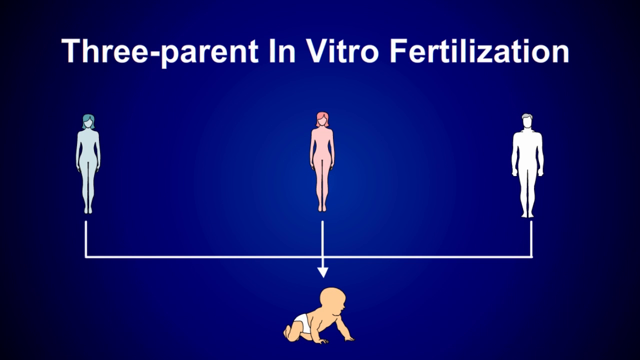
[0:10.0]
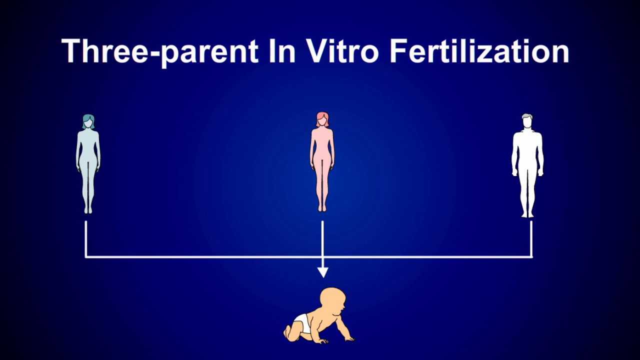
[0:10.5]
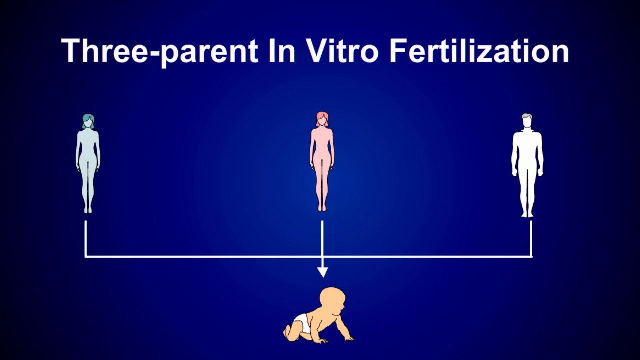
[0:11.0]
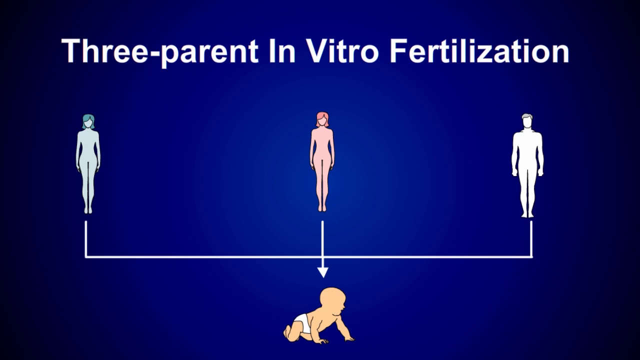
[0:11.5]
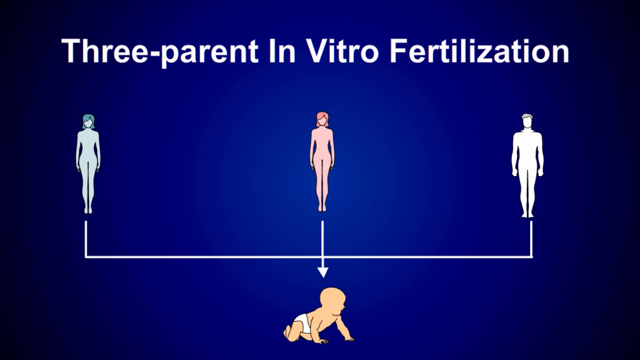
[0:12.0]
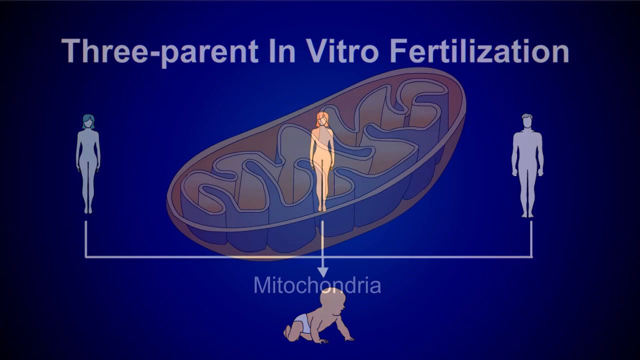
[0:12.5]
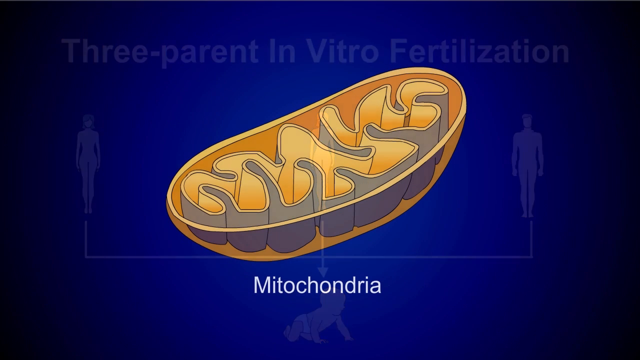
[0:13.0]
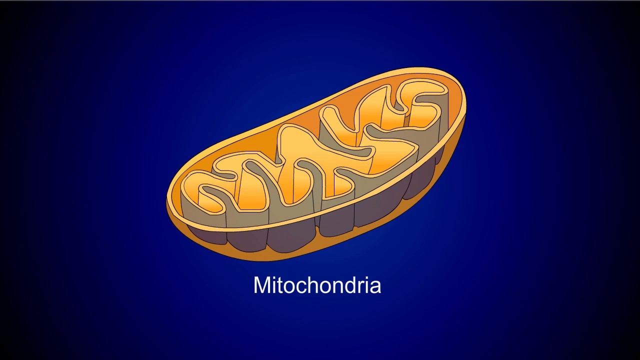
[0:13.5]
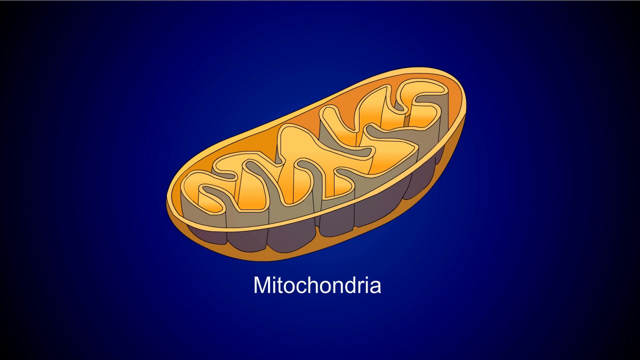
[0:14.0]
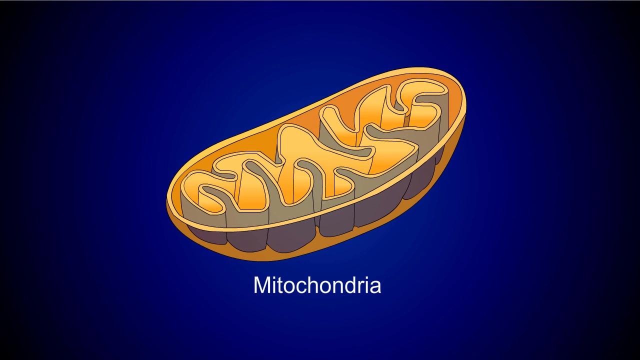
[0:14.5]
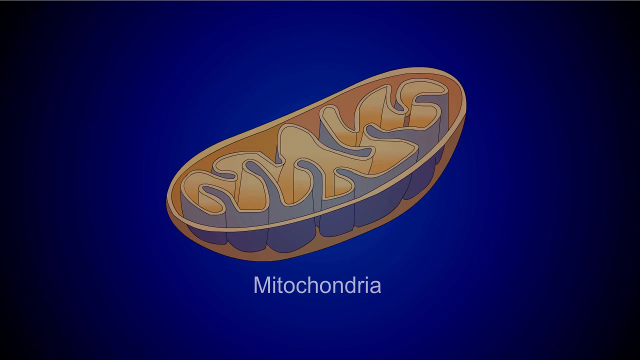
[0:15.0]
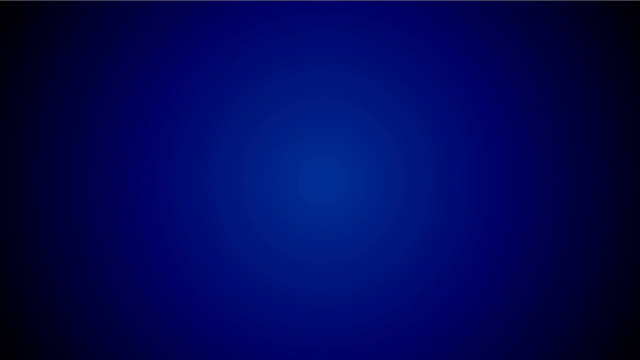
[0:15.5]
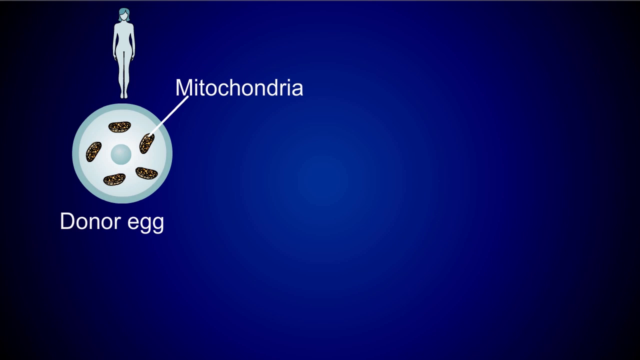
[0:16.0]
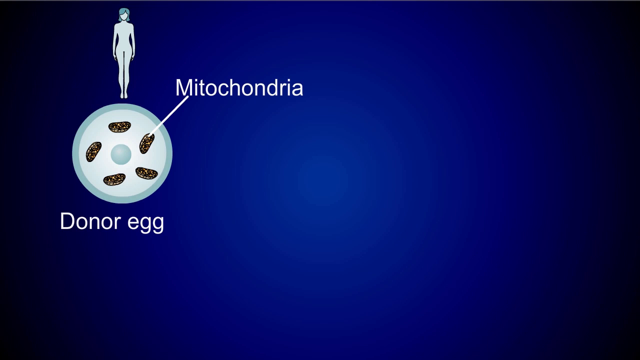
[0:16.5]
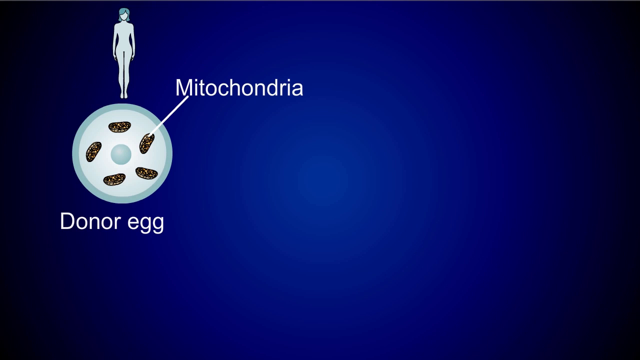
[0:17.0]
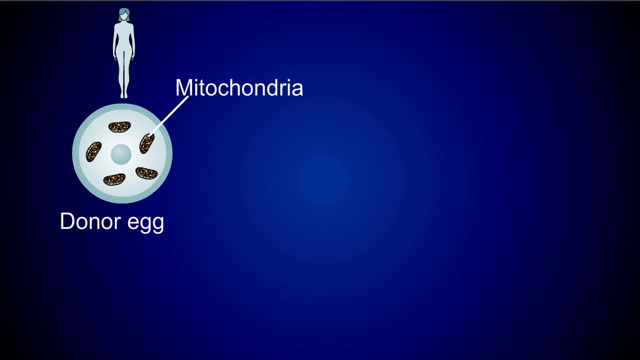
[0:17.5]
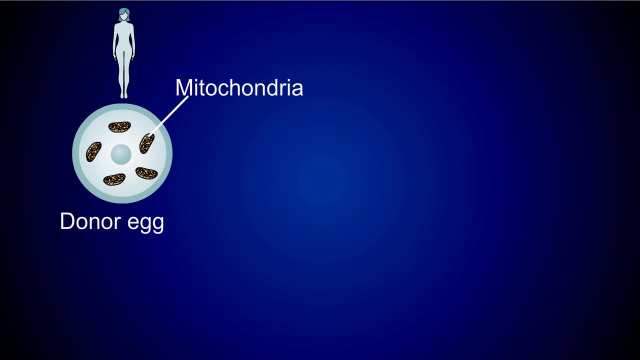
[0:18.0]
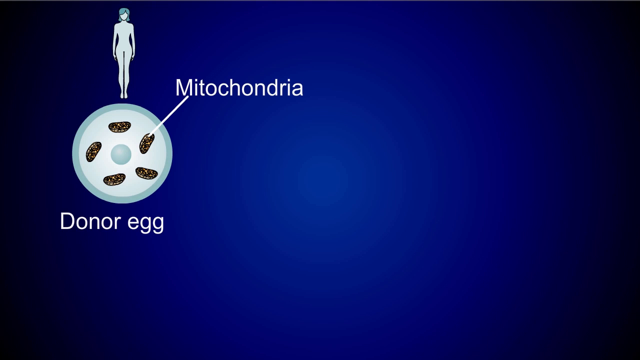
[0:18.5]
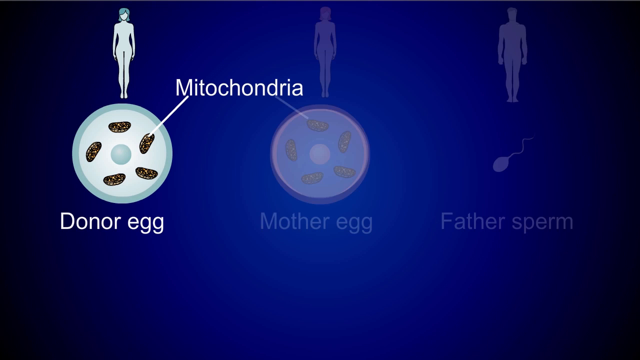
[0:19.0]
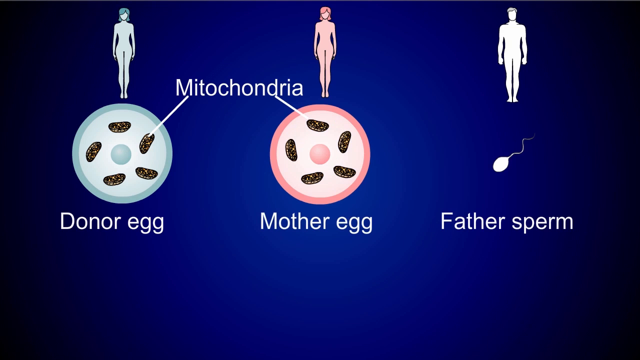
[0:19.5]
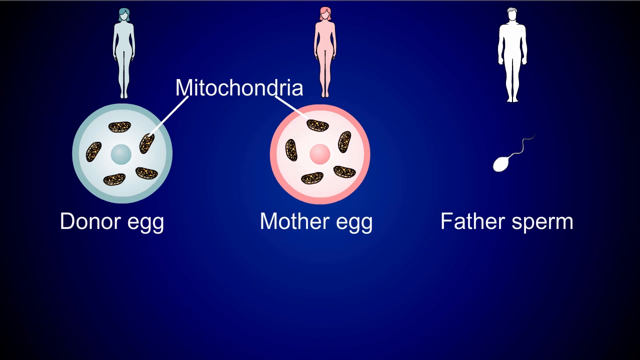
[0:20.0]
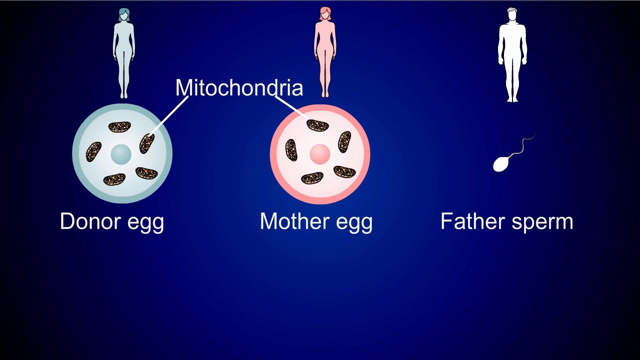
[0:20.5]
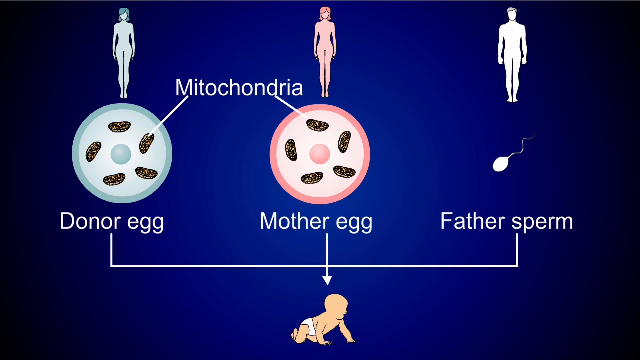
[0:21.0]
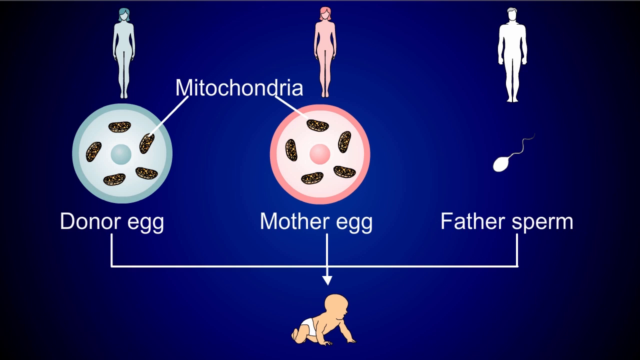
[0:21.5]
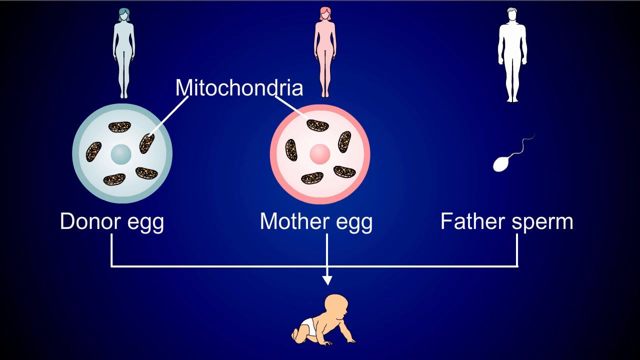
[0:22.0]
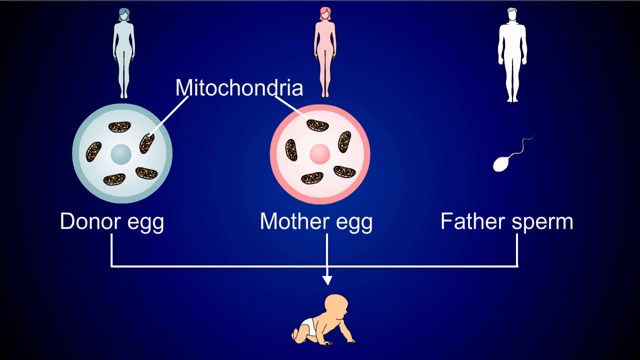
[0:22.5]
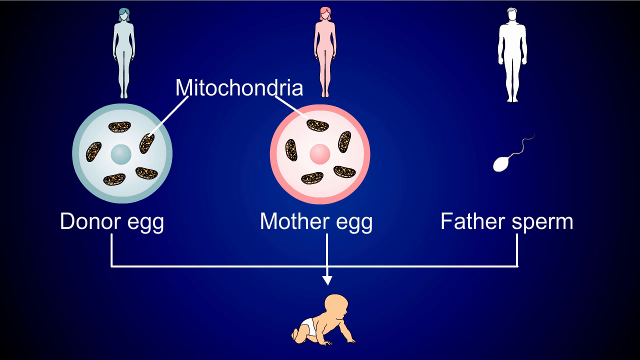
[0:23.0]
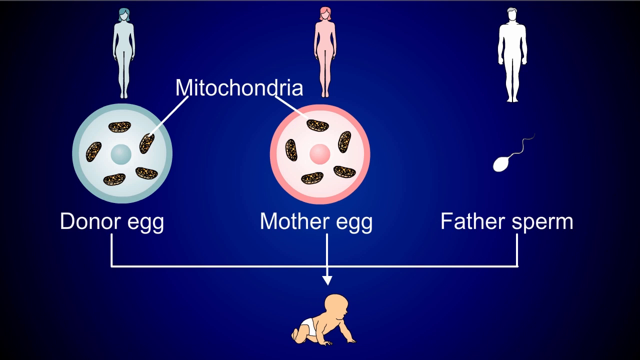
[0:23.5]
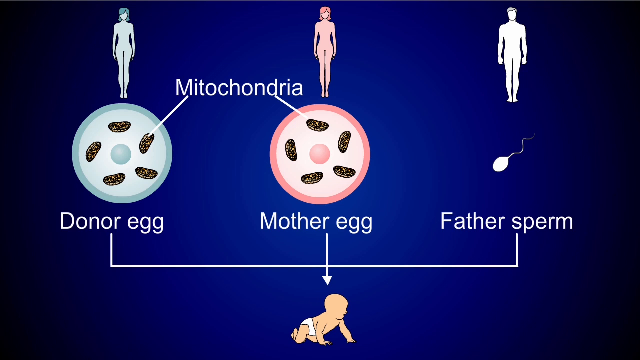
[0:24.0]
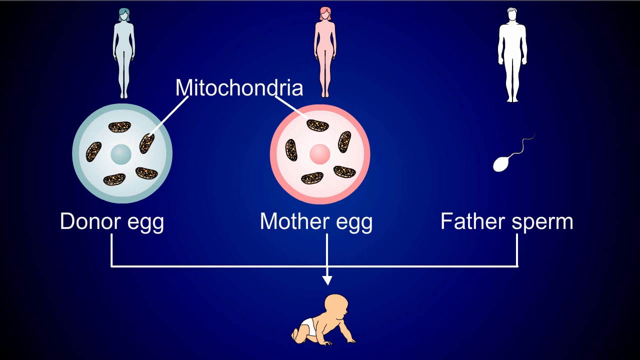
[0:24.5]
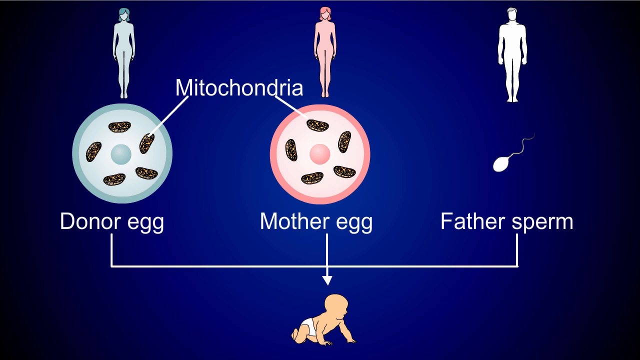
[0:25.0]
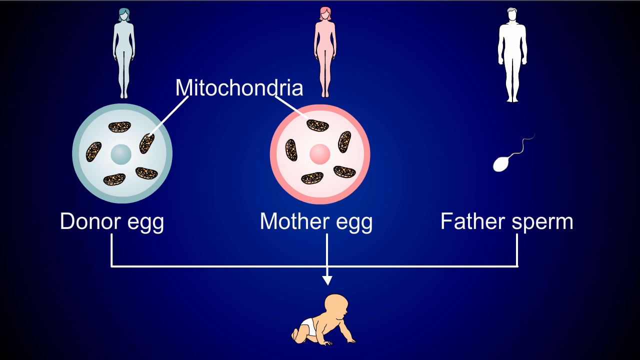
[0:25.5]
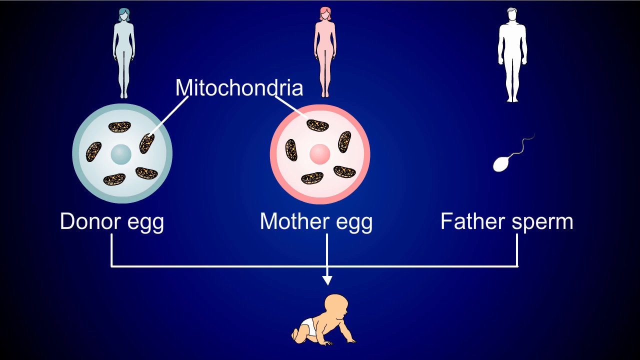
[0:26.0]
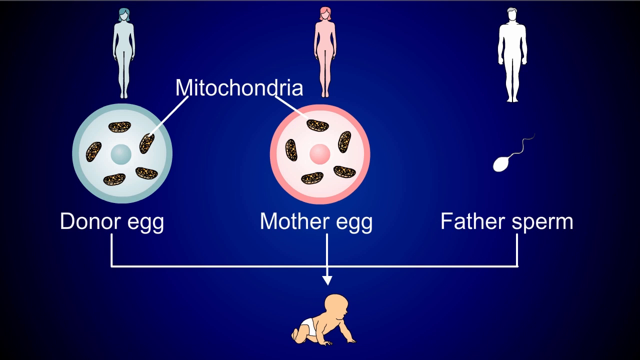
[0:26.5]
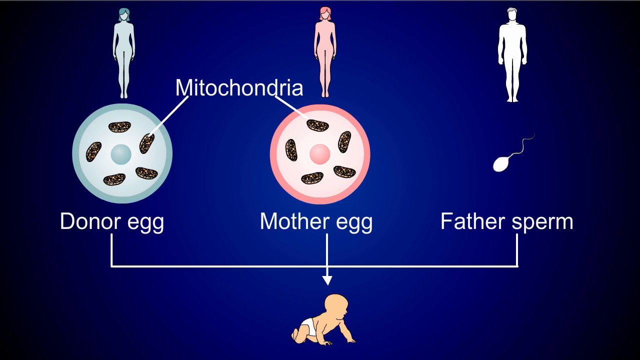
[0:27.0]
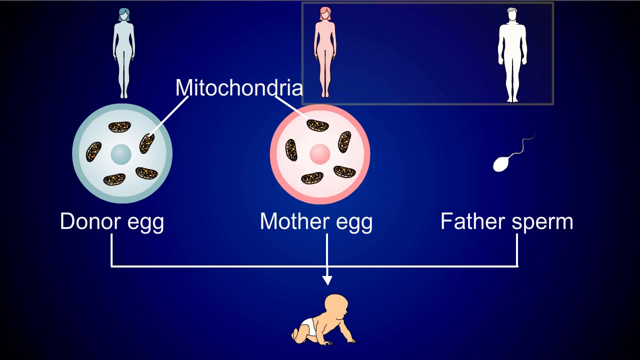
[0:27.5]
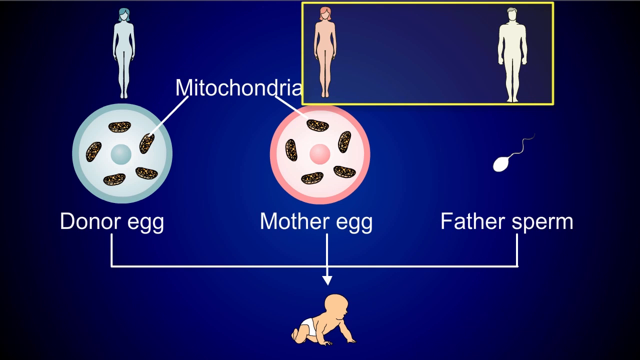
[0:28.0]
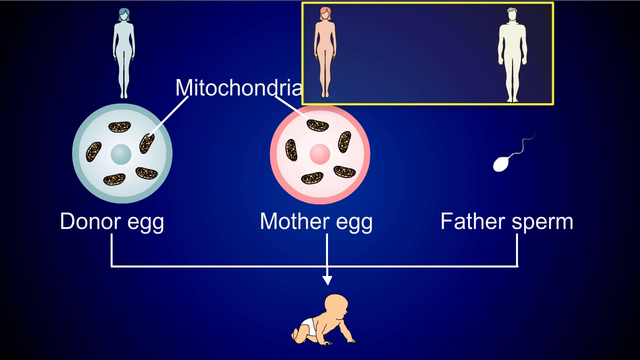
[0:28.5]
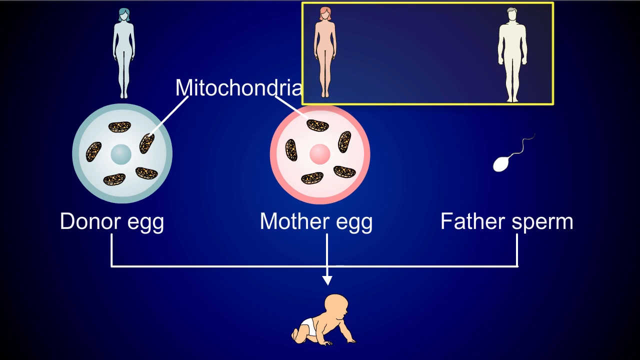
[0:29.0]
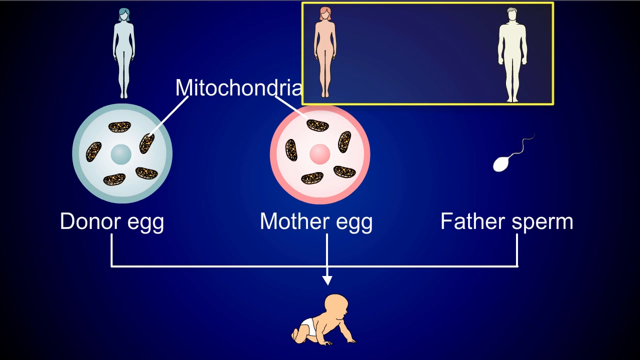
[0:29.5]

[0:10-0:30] The title at the top reads "three parent in vitro fertilization". Three cartoon-drawn people are shown: the one on the left looks like a woman and has kind of a blue tint; the person in the middle is a woman with a beige skin tone; the person on the far right is a man with kind of a whitish tint to his body. They are connected by a horizontal line with small vertical shoots running up to each person, and an arrow points down to a Caucasian baby wearing a white diaper. The video then cuts to the inner workings of a cell that kind of looks like a bowl of little spaghetti, labeled "mitochondria". A woman's icon appears, and the mitochondria inside a donor egg are pointed out. Next a mother egg, a donor egg and a father sperm are shown, with drawing indicating how they connect to the baby. A yellow rectangle is placed around the section showing the connection between the mother egg and the father sperm.